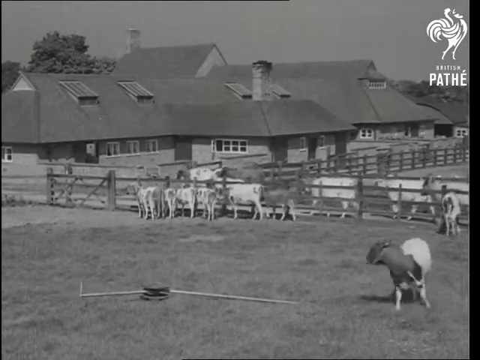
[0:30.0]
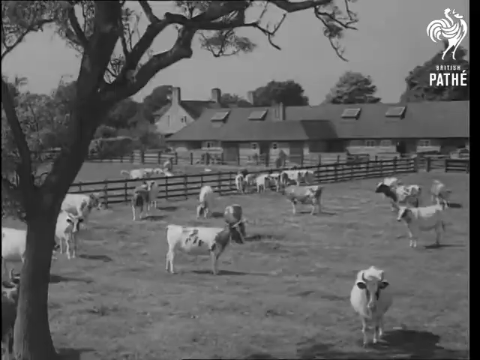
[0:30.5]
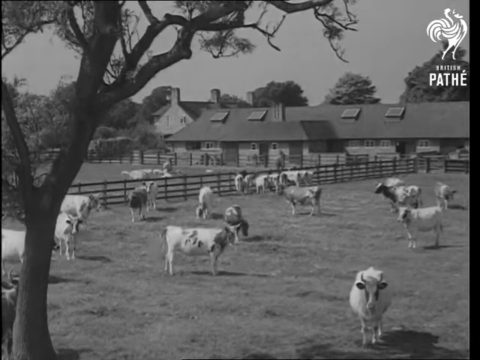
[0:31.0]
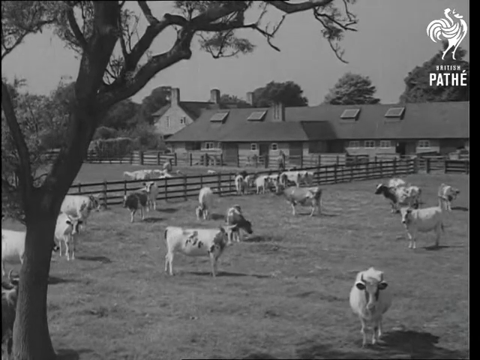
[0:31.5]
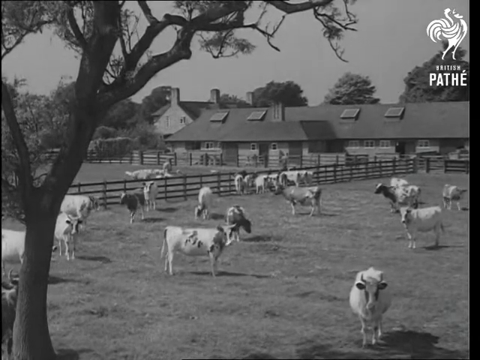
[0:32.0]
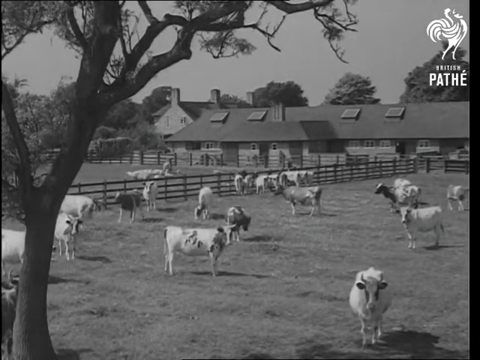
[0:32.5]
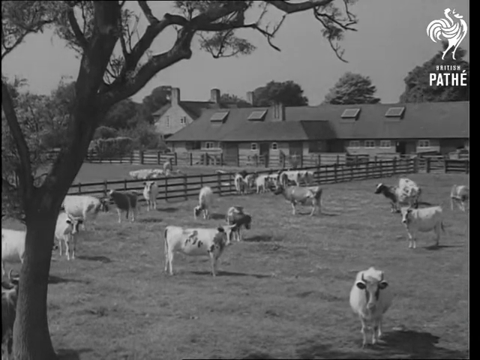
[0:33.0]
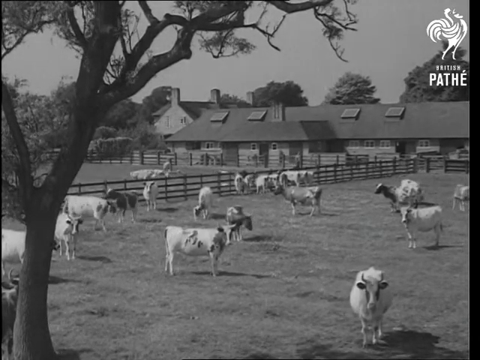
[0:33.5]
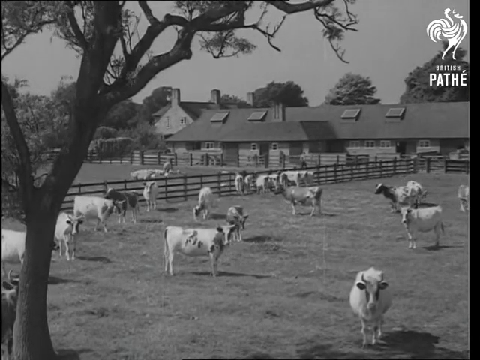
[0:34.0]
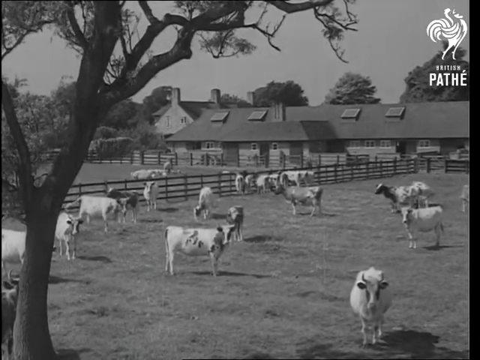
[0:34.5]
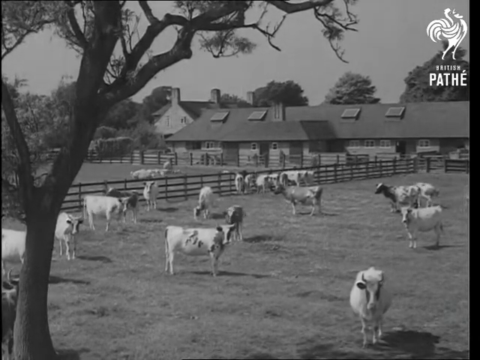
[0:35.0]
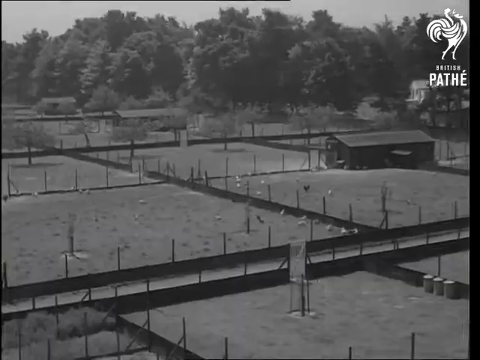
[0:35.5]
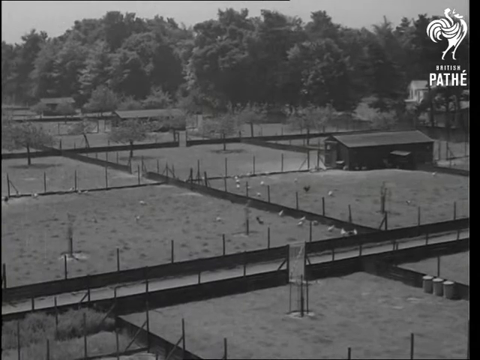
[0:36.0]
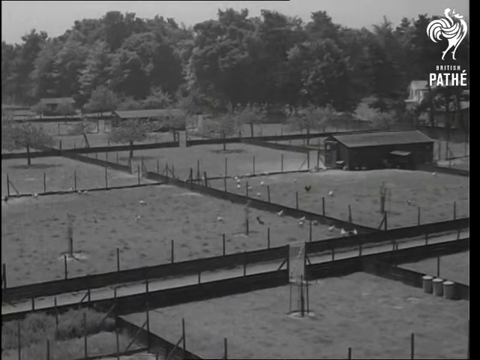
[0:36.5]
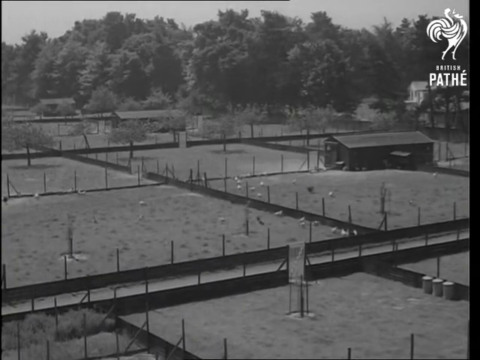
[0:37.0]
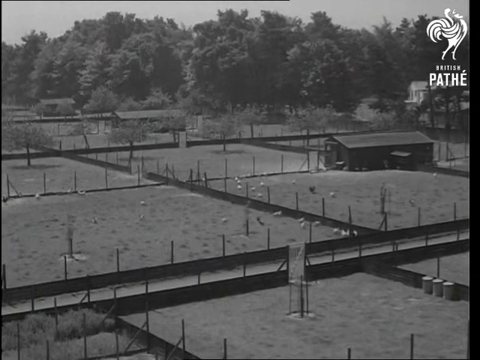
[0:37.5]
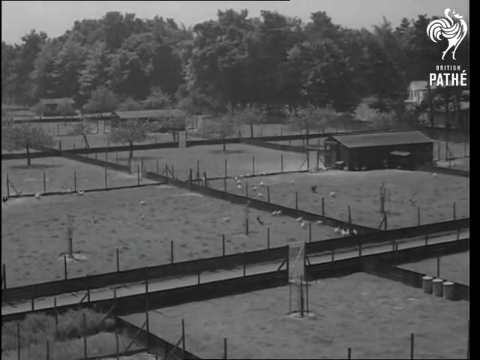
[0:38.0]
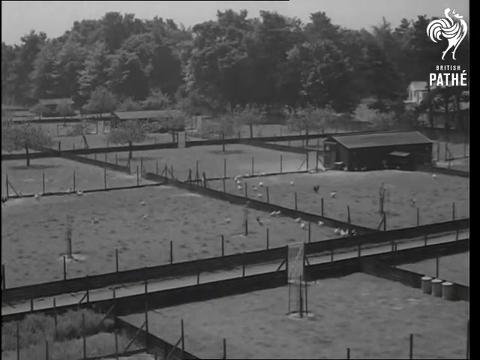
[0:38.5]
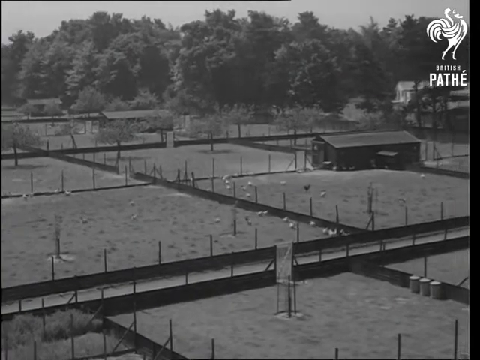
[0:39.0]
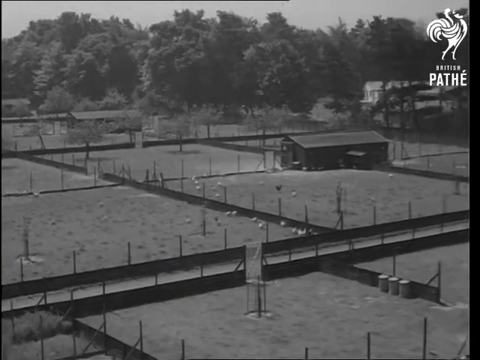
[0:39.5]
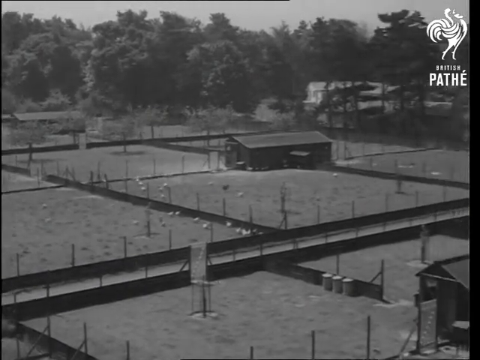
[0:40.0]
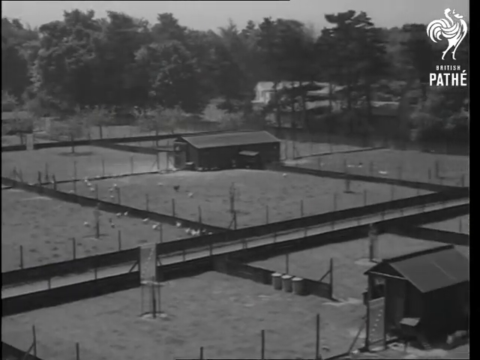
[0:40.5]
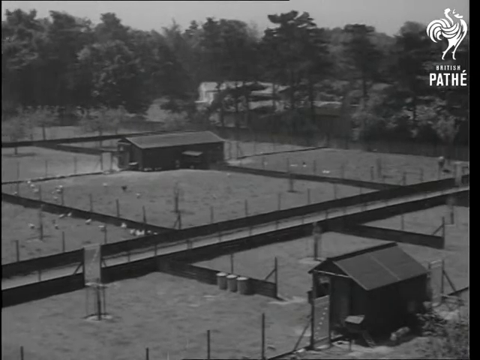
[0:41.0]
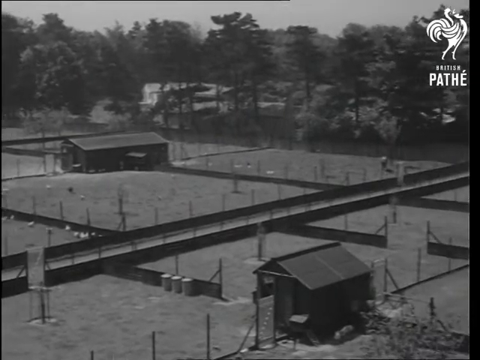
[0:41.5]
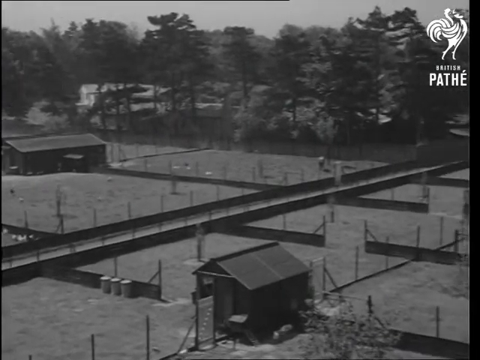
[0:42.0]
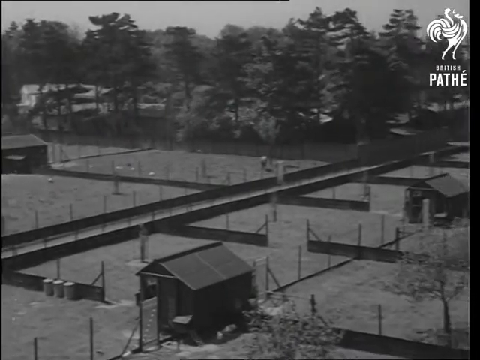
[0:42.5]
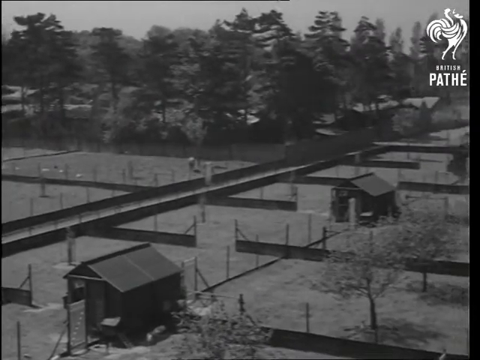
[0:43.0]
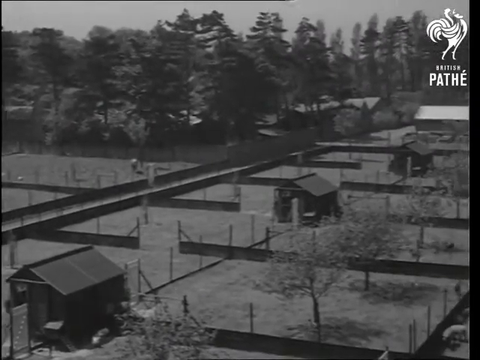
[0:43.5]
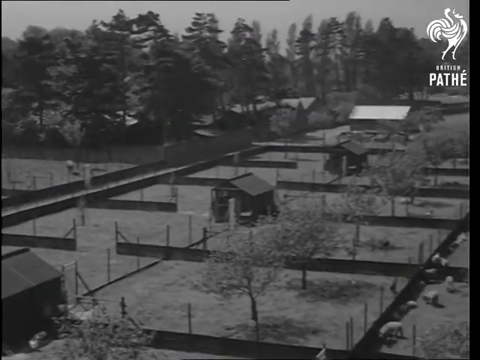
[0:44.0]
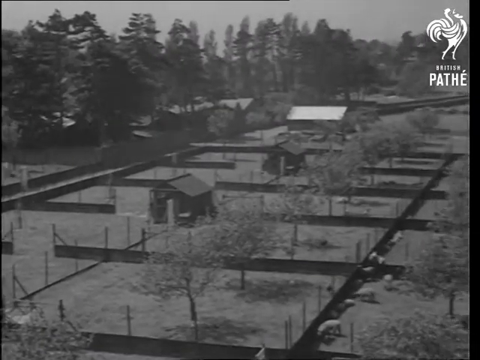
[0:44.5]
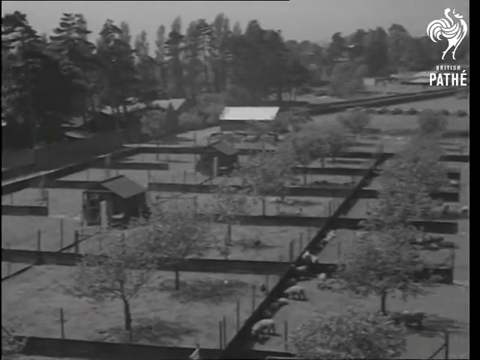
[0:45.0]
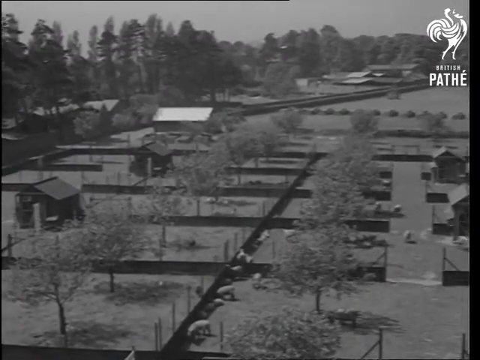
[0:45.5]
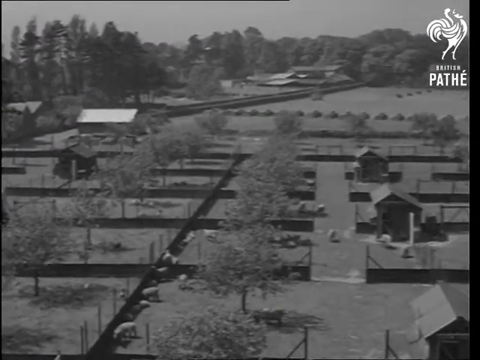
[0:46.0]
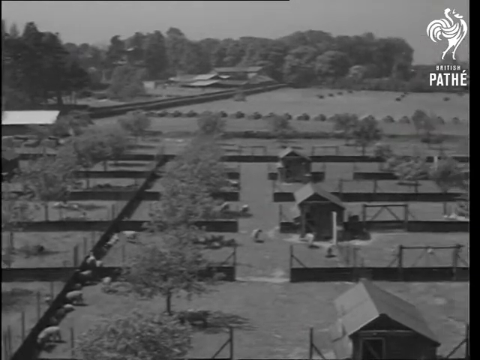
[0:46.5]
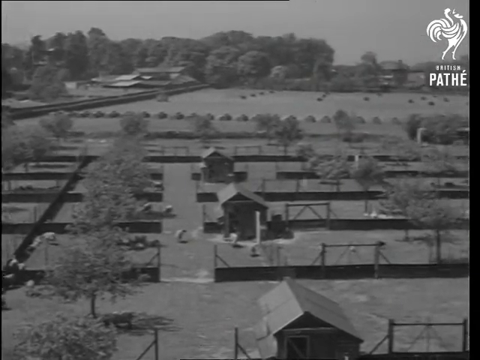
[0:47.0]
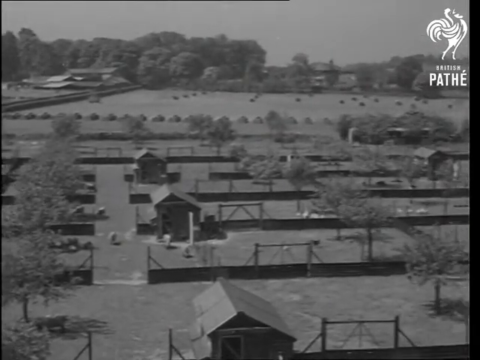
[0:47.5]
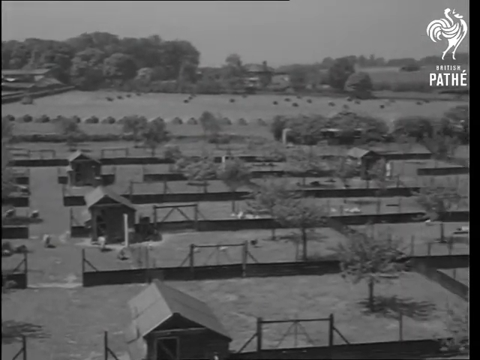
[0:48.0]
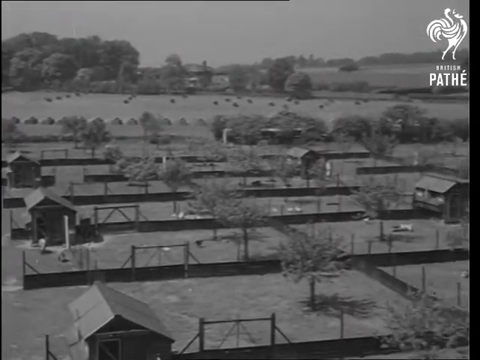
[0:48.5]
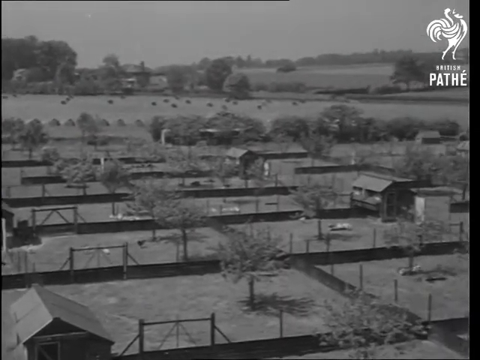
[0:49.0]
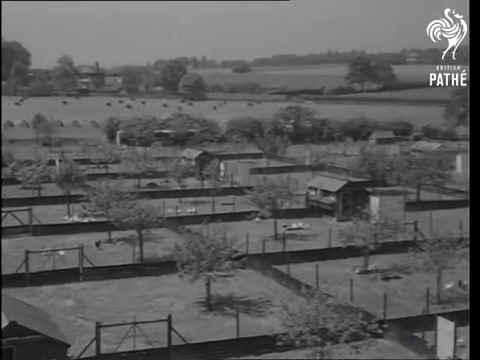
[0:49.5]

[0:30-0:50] On the farm, the cows are on the grass in the fenced-in area, with the building in the background, and they seem to be grazing. An overhead shot shows more of the farm, divided into squares and rectangles. A smaller building in one part may be a barn or a place to keep equipment, and there are many trees in the background. These appear to be areas where chickens are kept; the type of animal is hard to tell at first, but as the shot moves, what look like little chickens walk around the area. The view pans over more of the farm, revealing more and more space with little houses. Very quickly the scene changes to a group of women in white who appear to be putting eggs in something.